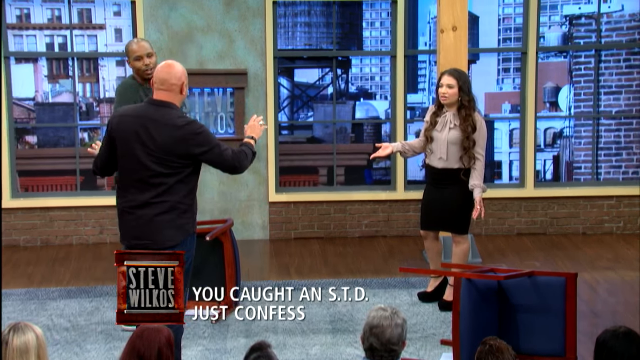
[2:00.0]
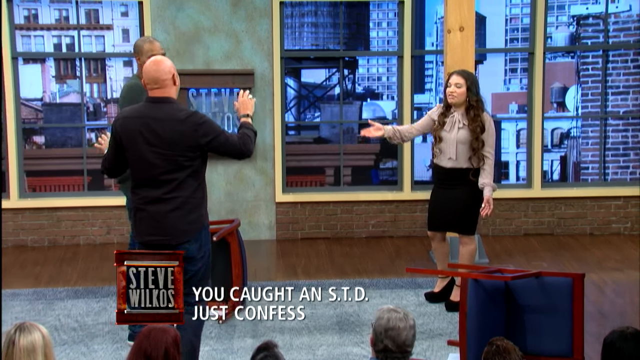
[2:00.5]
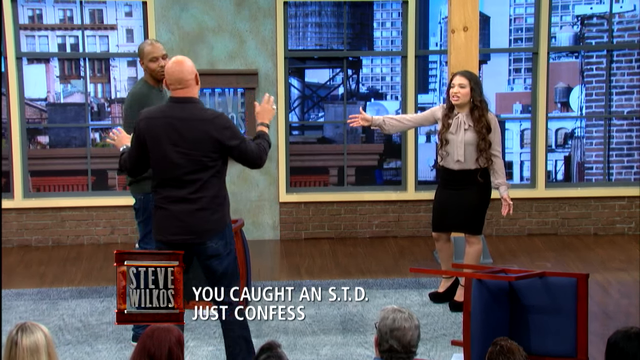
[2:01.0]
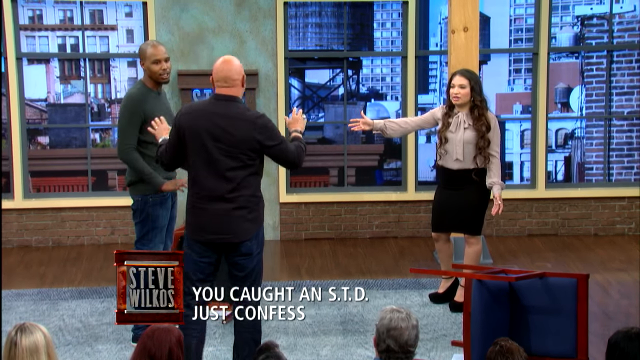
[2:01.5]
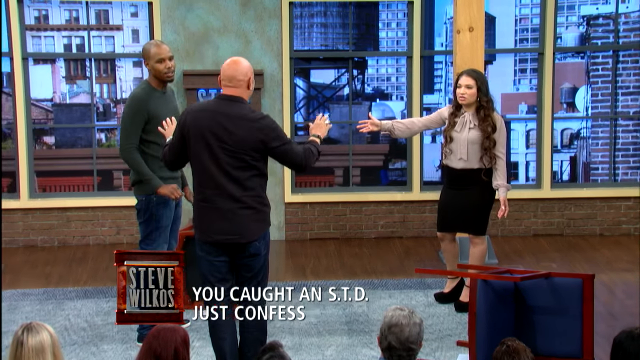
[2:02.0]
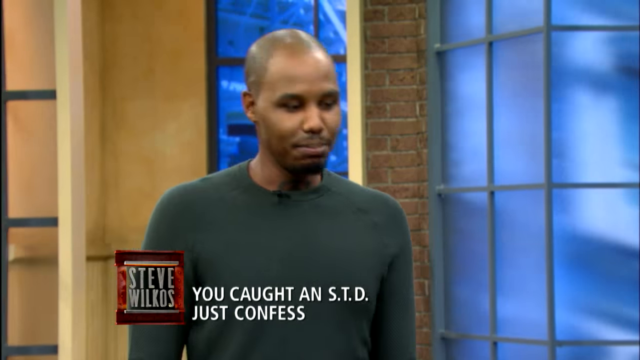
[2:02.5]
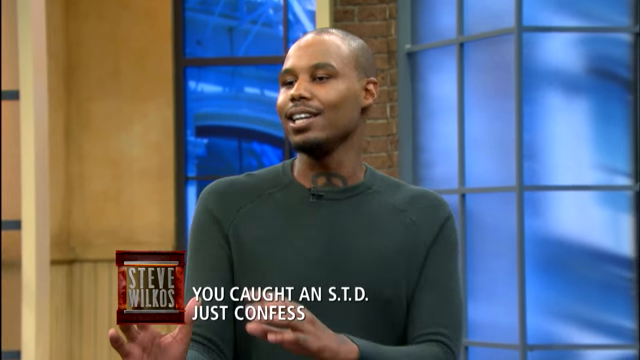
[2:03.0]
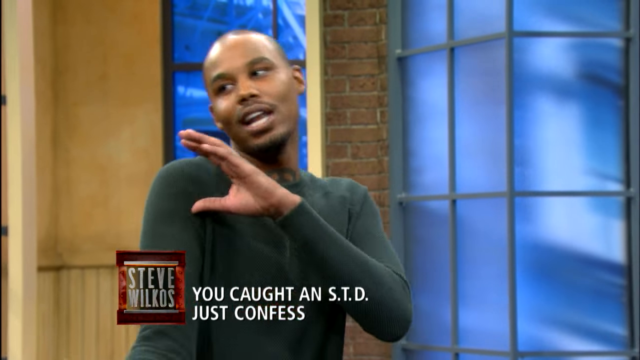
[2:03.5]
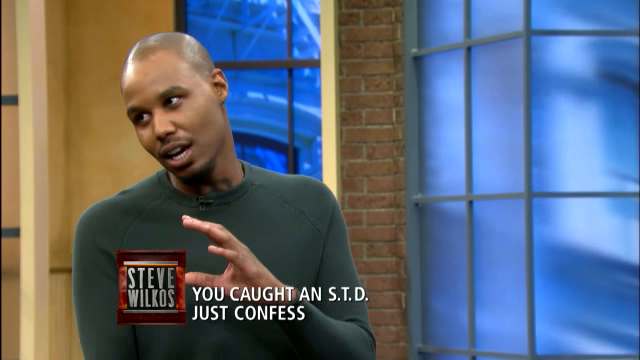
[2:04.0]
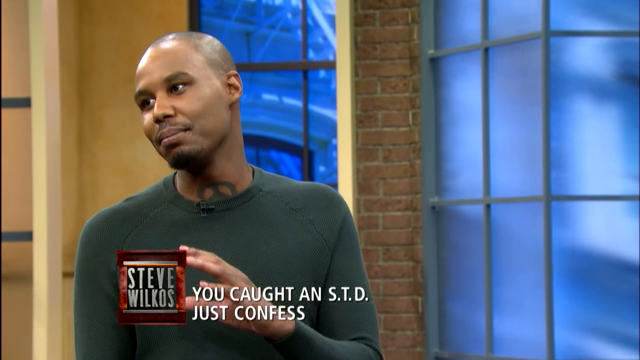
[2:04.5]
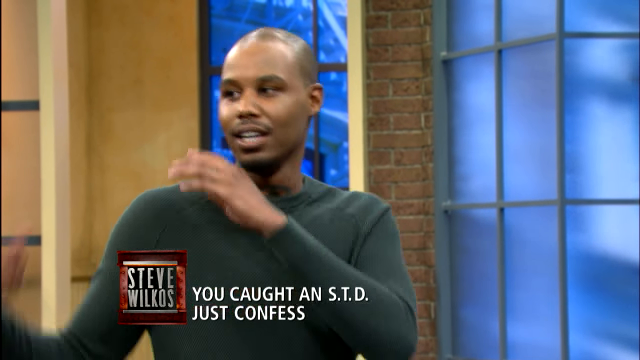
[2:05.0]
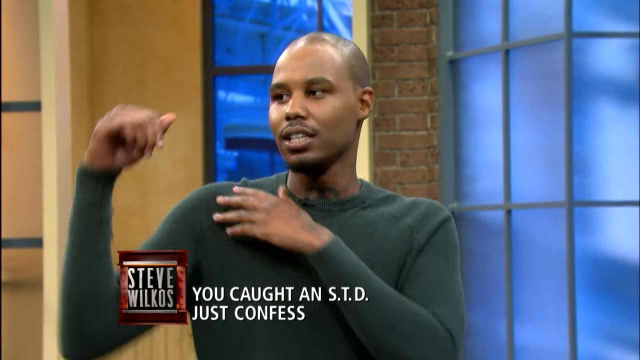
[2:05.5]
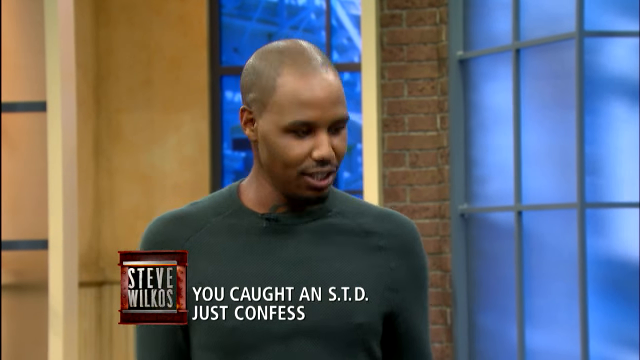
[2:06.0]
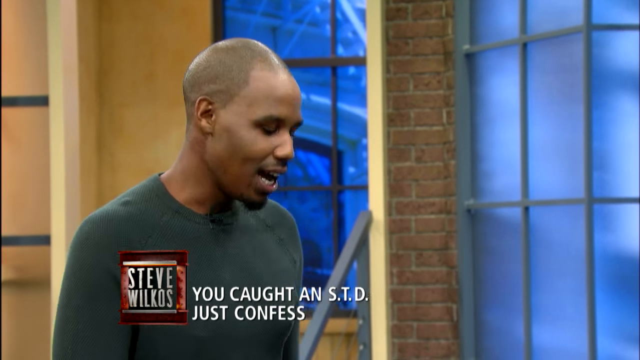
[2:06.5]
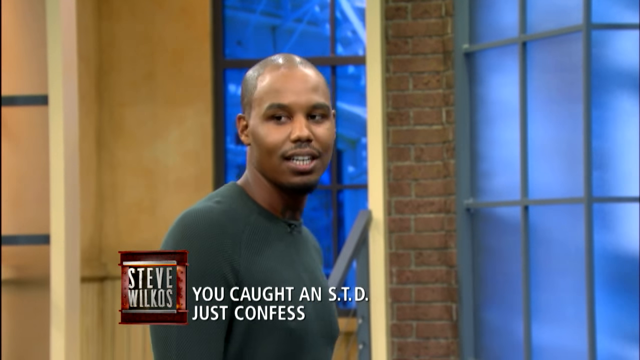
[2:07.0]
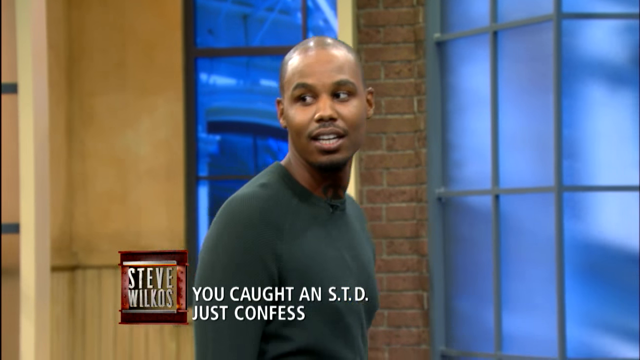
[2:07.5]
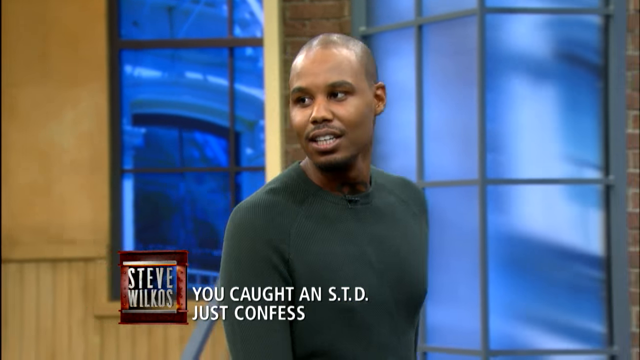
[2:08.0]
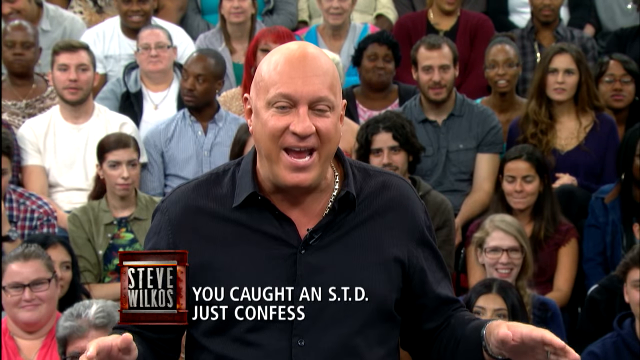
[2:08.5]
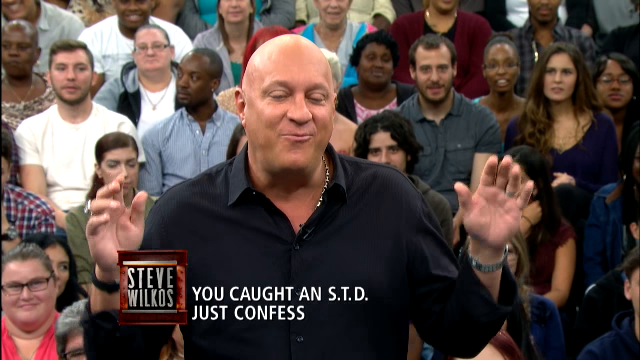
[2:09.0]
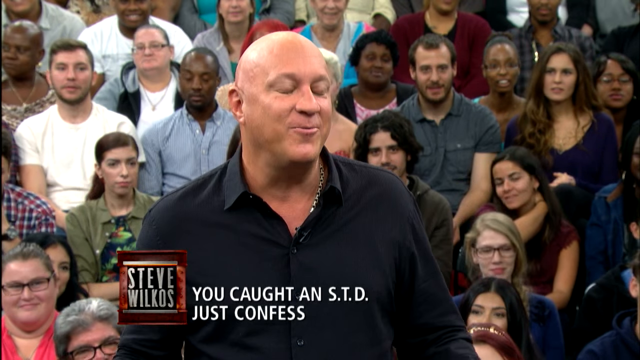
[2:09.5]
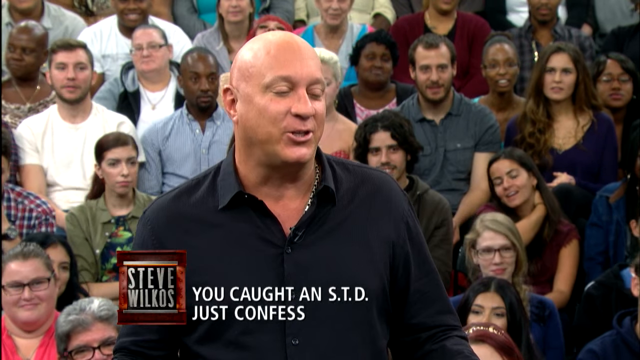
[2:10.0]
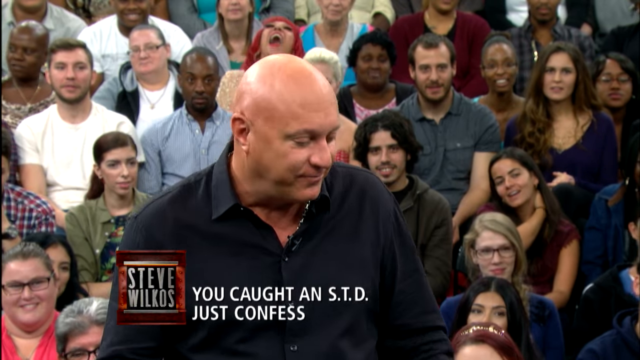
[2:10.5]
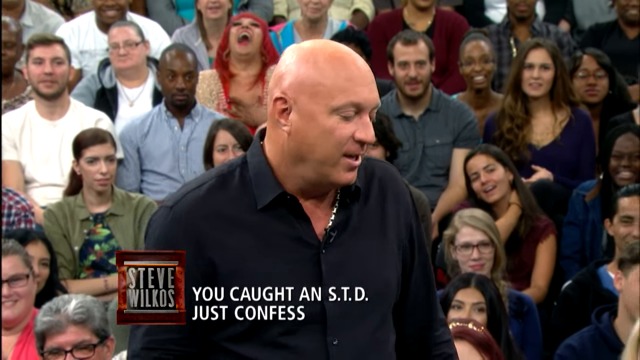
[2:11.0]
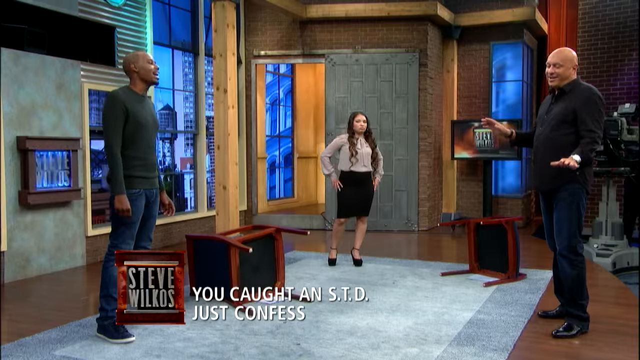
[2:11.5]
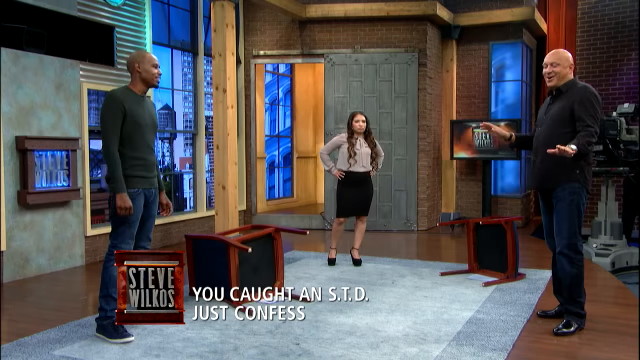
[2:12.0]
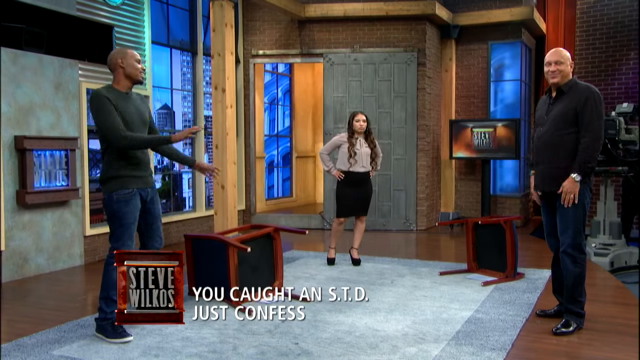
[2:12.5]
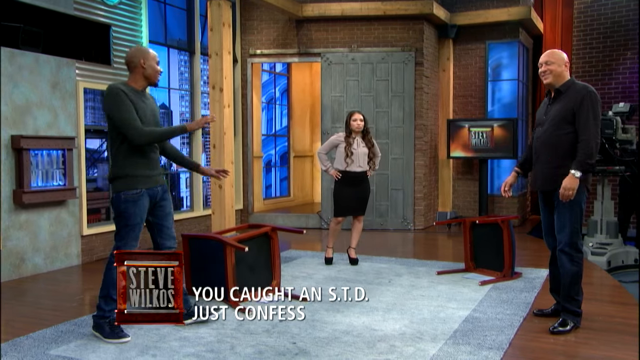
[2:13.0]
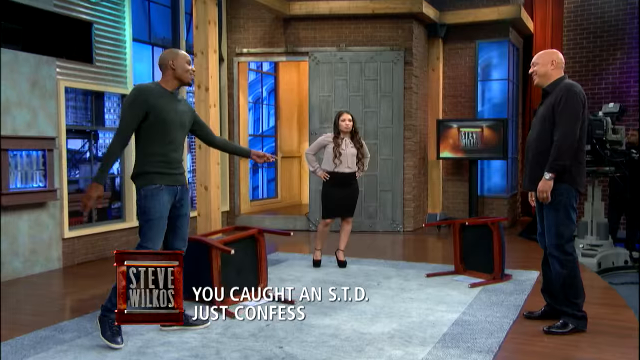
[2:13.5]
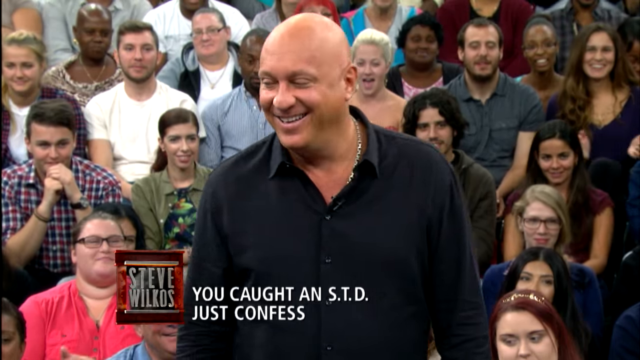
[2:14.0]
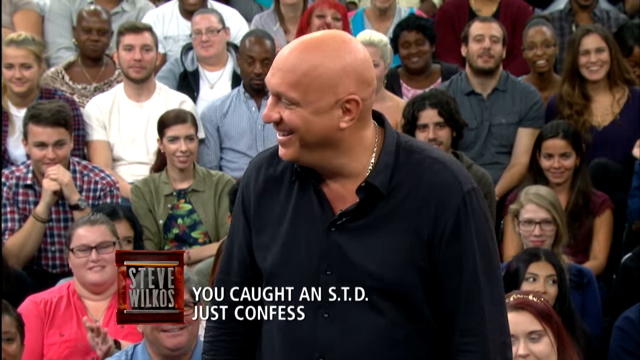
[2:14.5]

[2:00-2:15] In a wide shot from behind the host's head, the three interact; the host still has his hands up for emphasis. The woman is upset, and her gestures become a bit more exaggerated. The video moves to a close-up of the young man, who flexes his left arm in emphasis. It then shifts to the host, who still seems very amused and gestures emphatically with both hands before letting them drop. Next comes a sideways view of everyone, from the left of the original back view: they are standing in a roughly triangular shape, with the two chairs still lying on the floor between them. Both men make a similar gesture with their arms. The video then switches to the host laughing at something that was said.